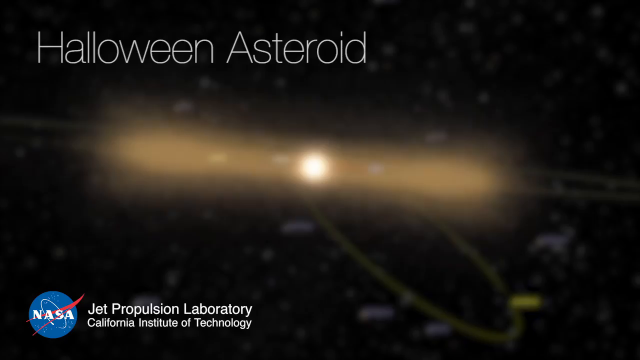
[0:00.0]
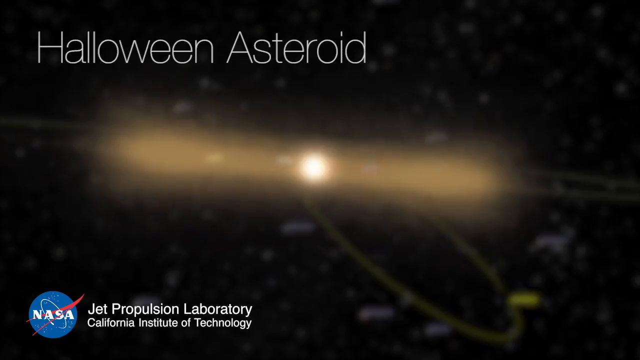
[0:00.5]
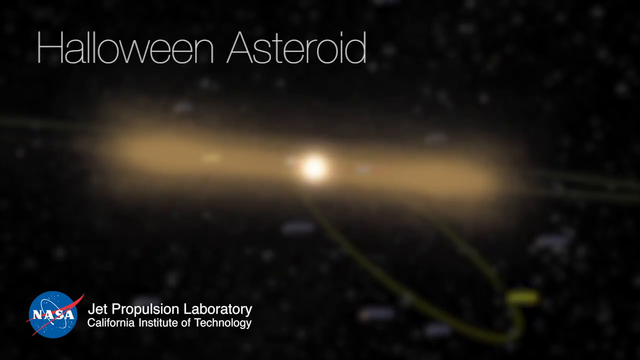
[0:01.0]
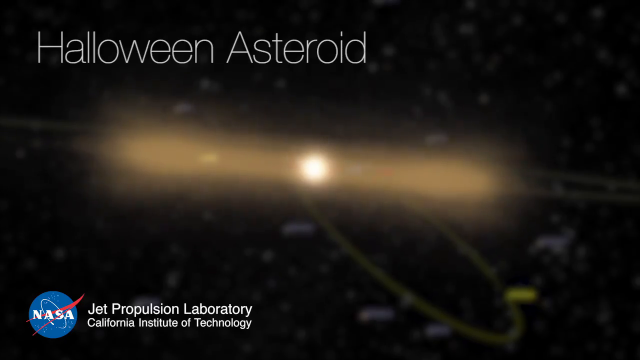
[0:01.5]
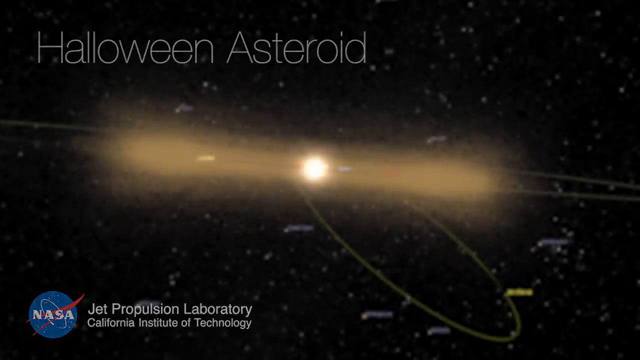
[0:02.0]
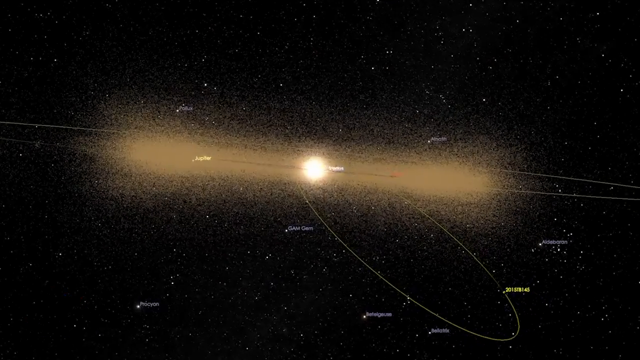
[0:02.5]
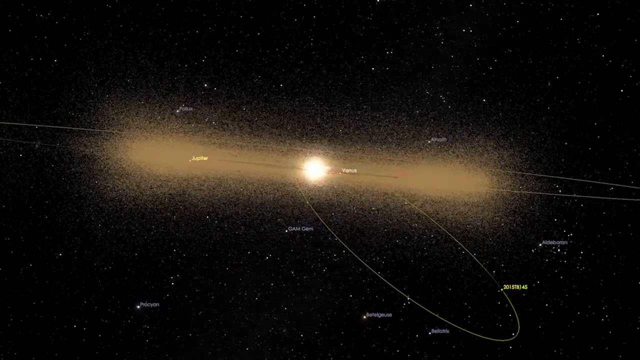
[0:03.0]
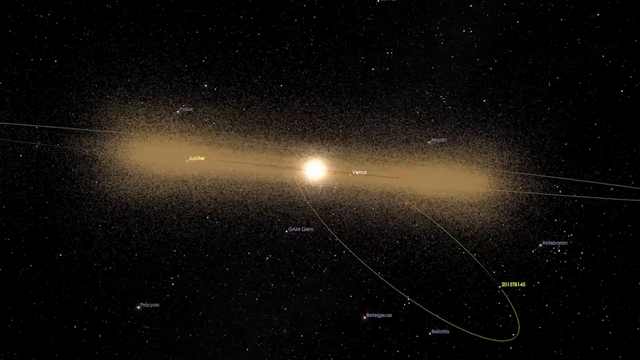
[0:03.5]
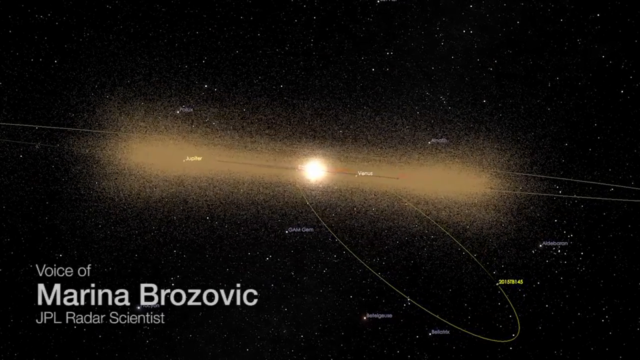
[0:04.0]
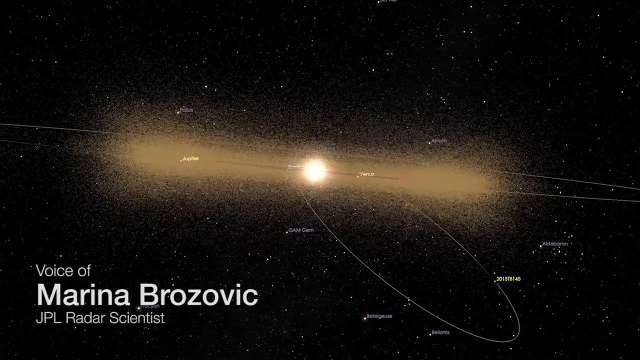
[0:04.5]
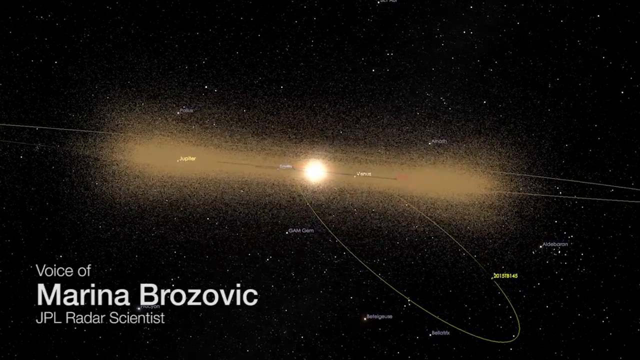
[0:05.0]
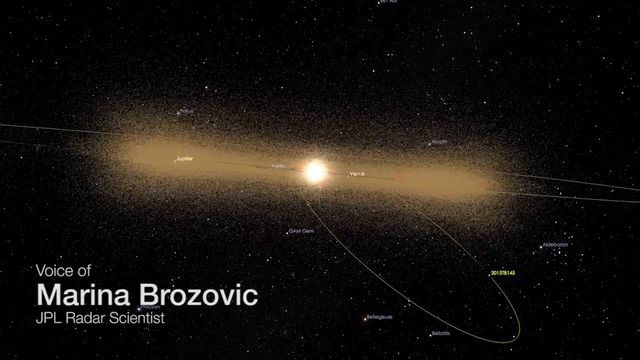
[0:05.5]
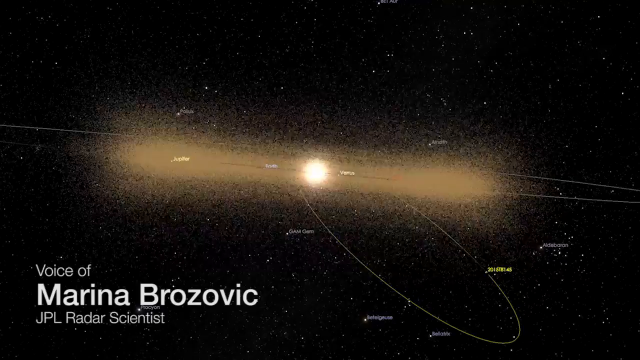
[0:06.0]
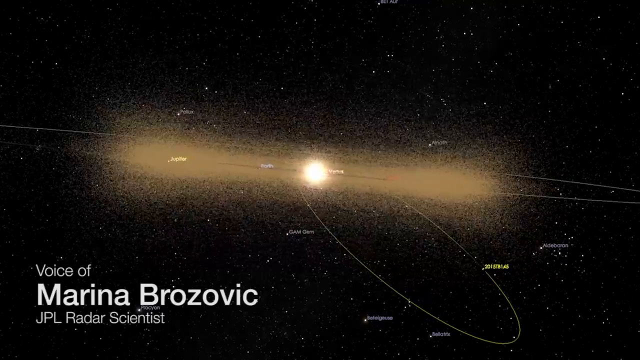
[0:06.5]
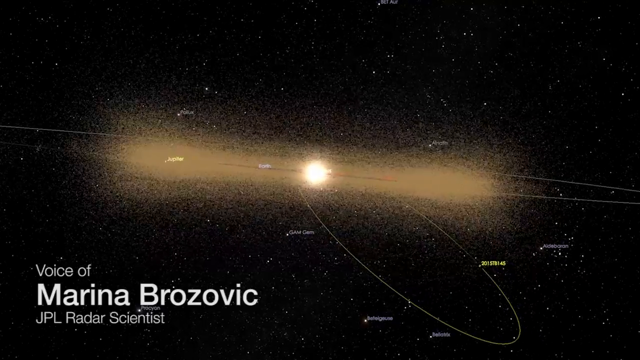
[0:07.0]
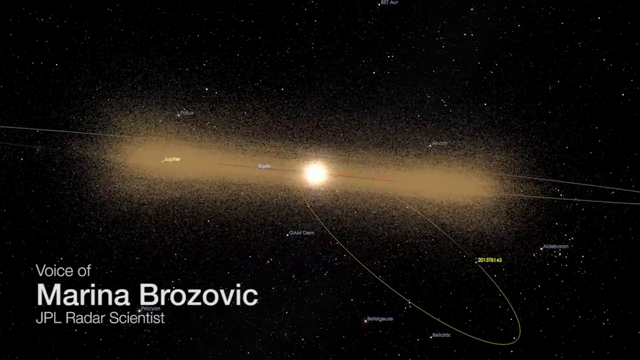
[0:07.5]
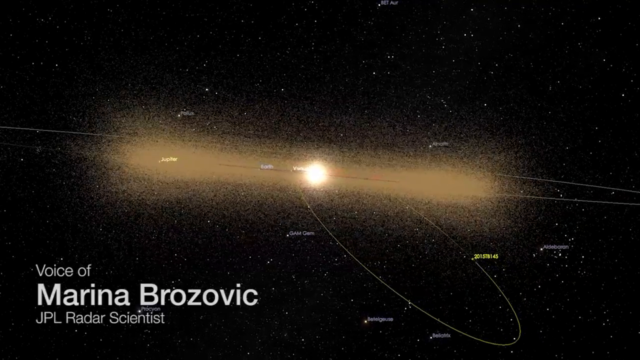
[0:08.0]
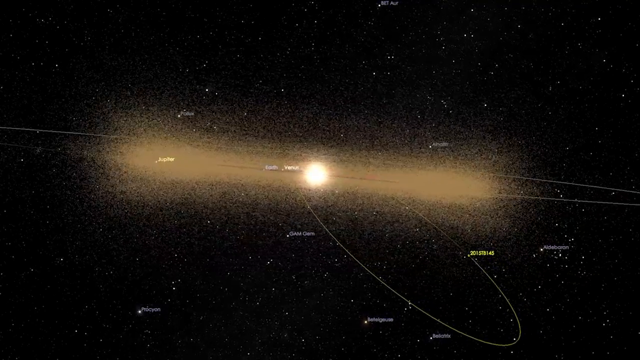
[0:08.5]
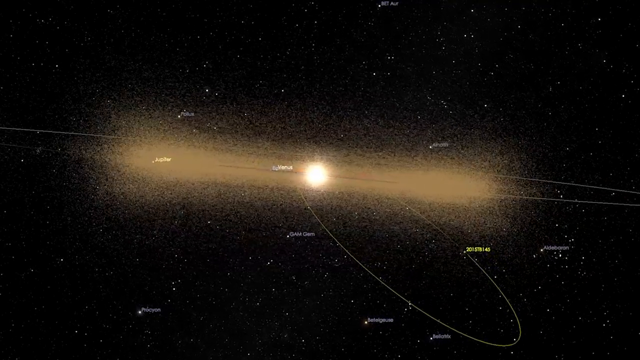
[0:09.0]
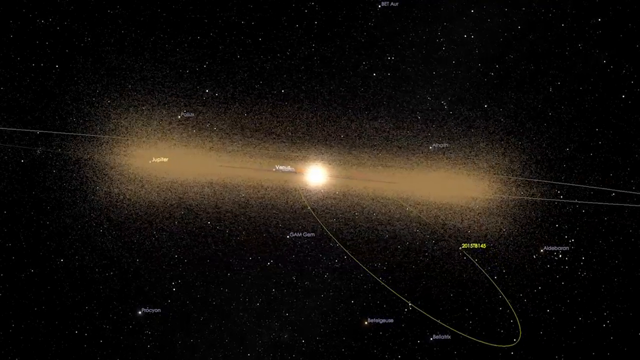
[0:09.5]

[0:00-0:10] The title appears to be "Halloween Asteroid" or something similar, with the words "Halloween Asteroid is Radar Science". Text on screen reads "Voice of Marina Brozovic". The video looks like it was produced by the Jet Propulsion Laboratory. A graphic shows what is presumably an asteroid, a star-like object that is very bright and shining, emanating light. A couple of what look like pathways are drawn, presumably paths of the asteroid. Some very small, unreadable text is on the screen, probably marking regions along the path.